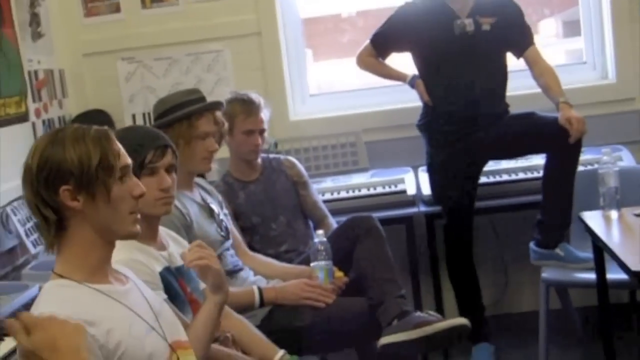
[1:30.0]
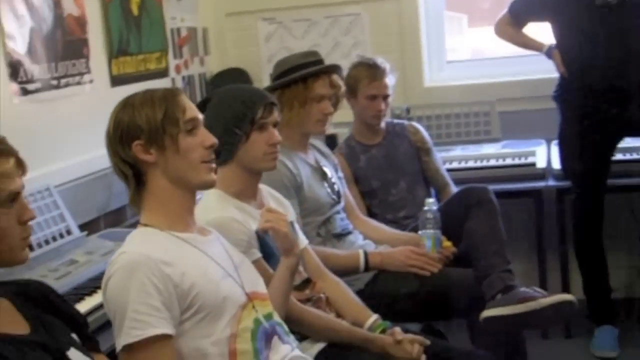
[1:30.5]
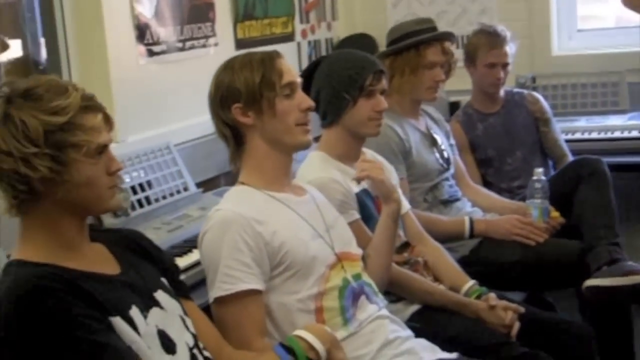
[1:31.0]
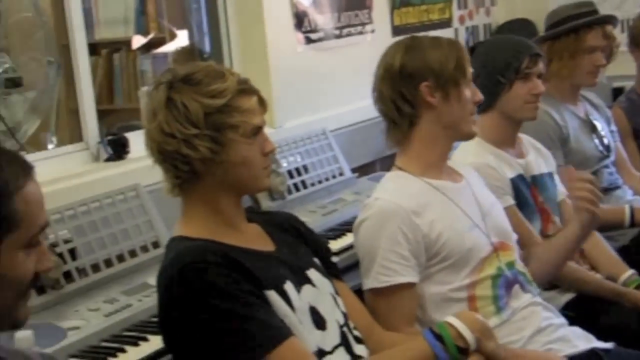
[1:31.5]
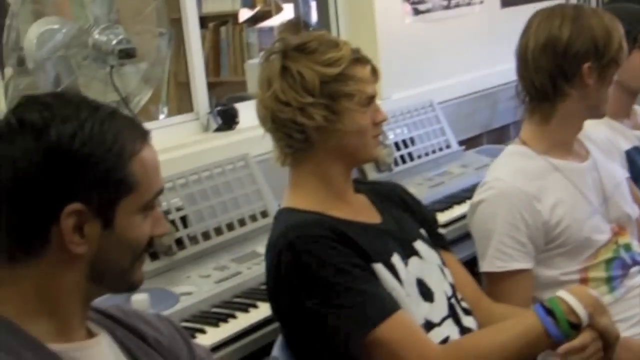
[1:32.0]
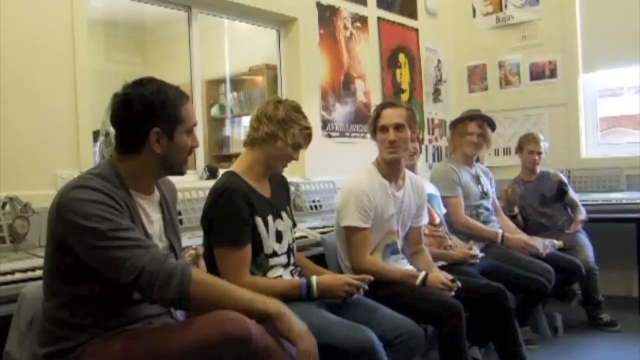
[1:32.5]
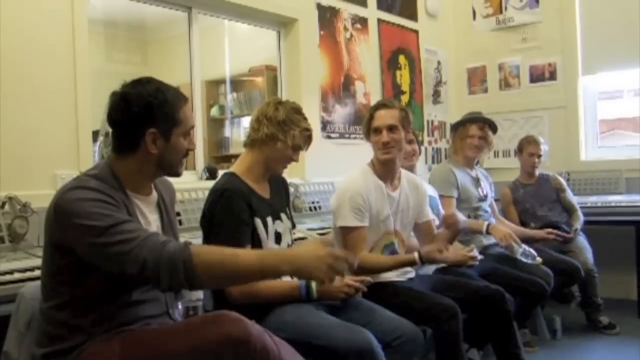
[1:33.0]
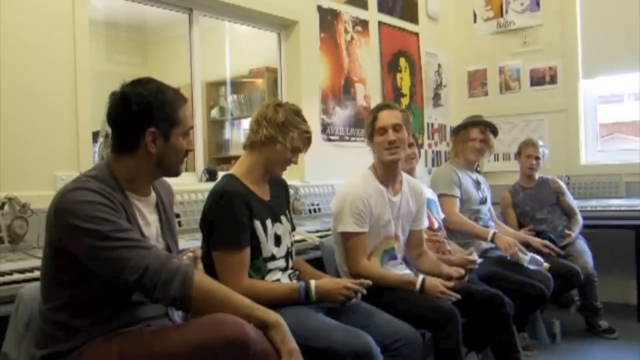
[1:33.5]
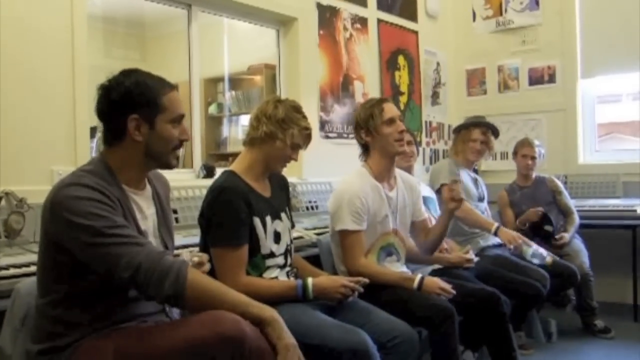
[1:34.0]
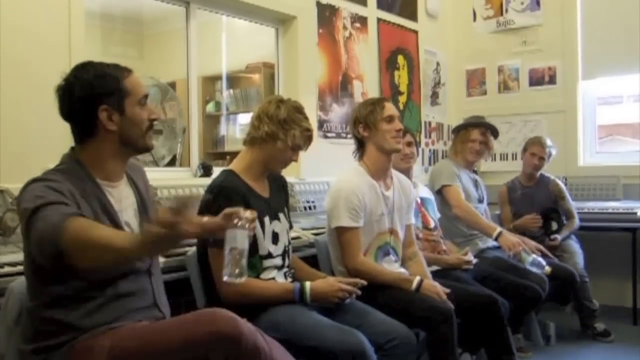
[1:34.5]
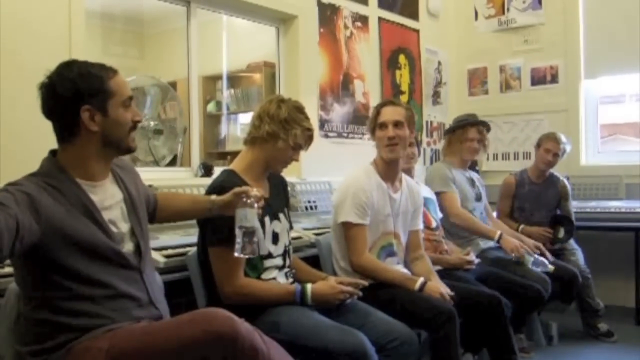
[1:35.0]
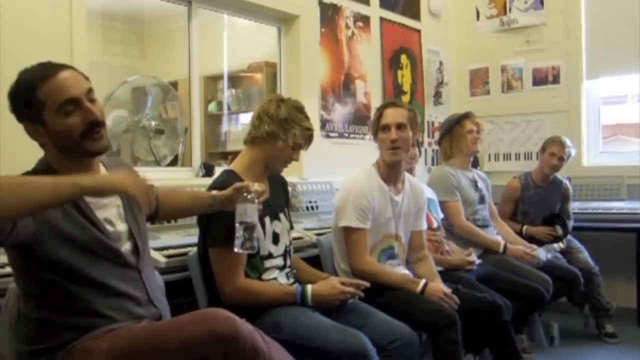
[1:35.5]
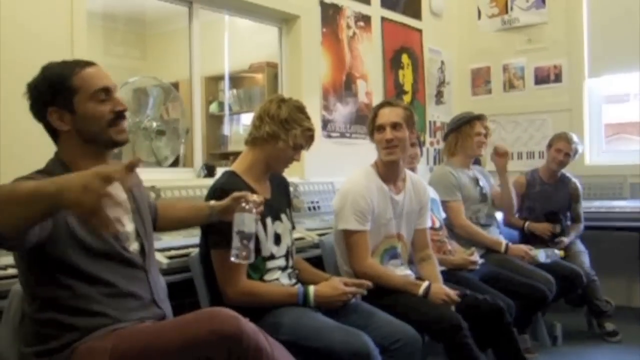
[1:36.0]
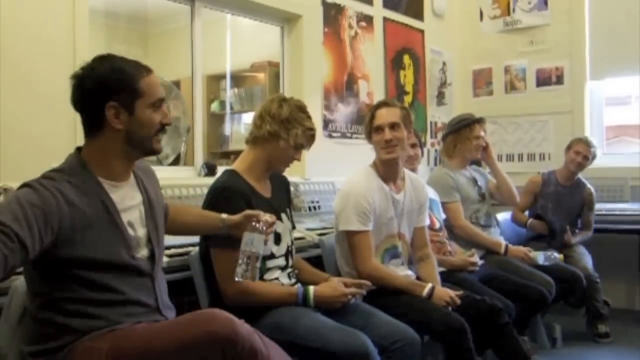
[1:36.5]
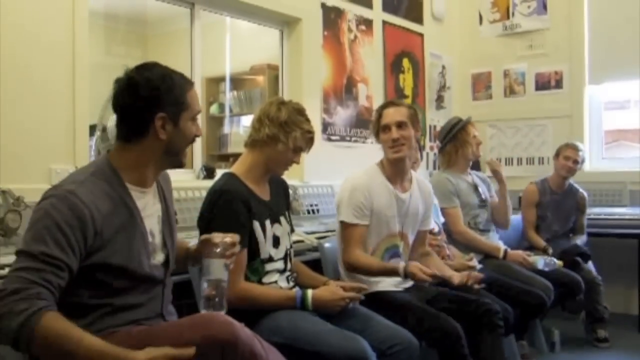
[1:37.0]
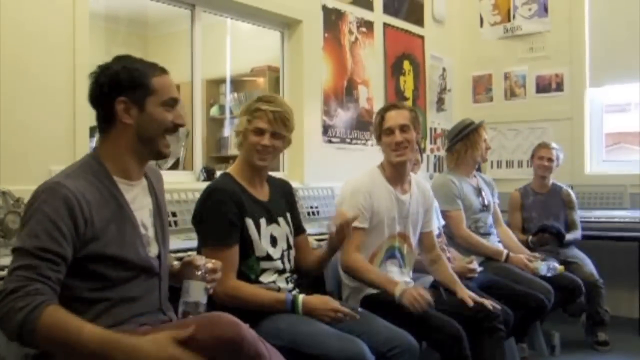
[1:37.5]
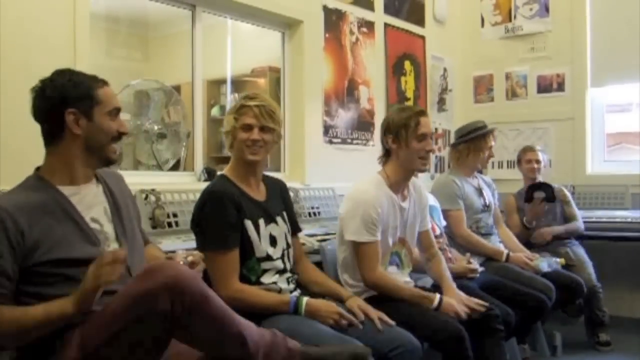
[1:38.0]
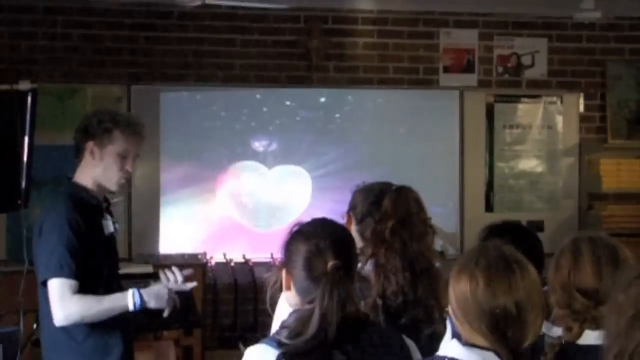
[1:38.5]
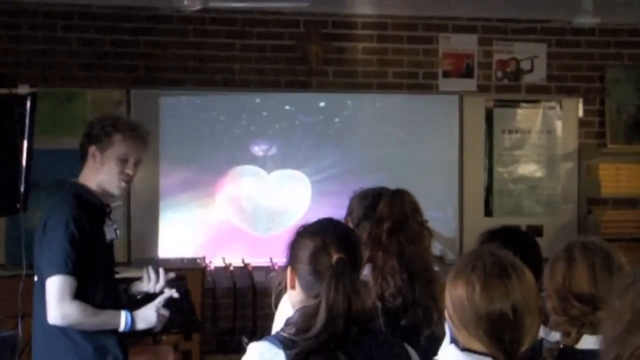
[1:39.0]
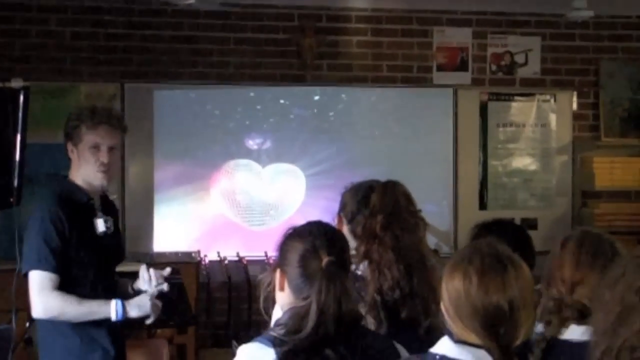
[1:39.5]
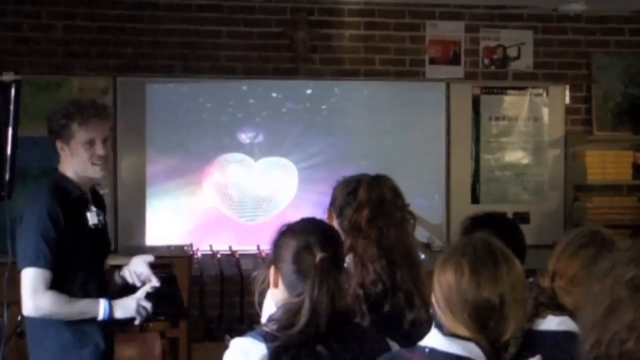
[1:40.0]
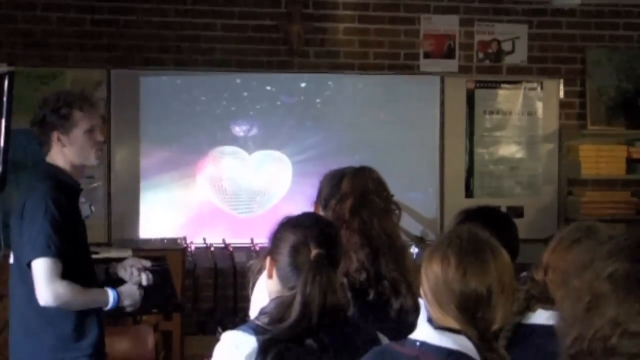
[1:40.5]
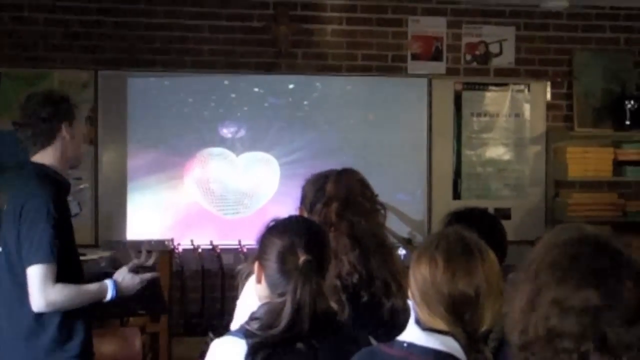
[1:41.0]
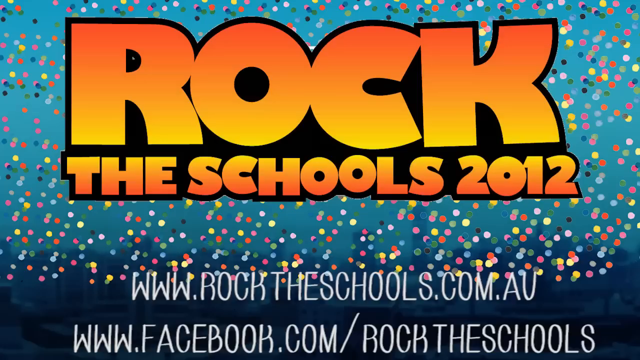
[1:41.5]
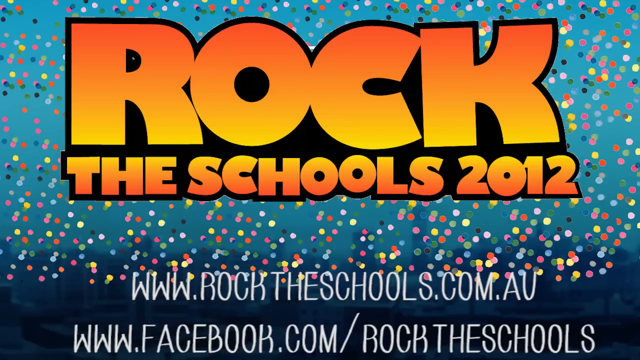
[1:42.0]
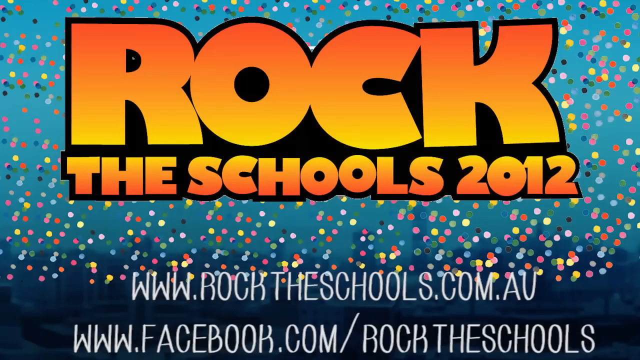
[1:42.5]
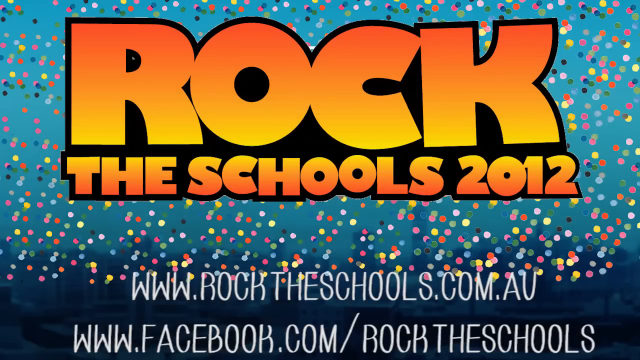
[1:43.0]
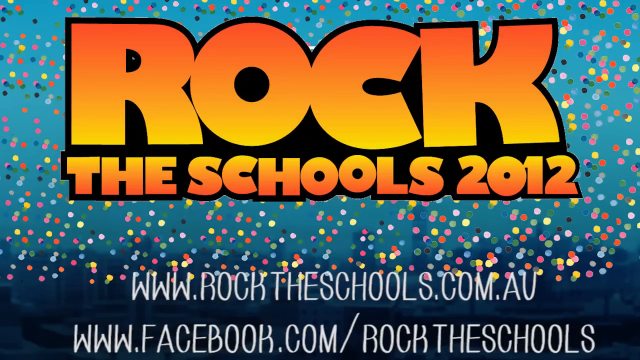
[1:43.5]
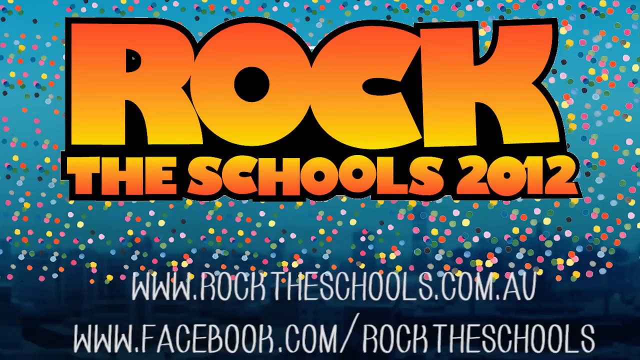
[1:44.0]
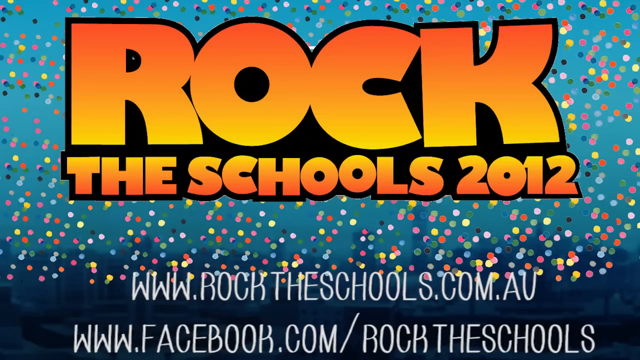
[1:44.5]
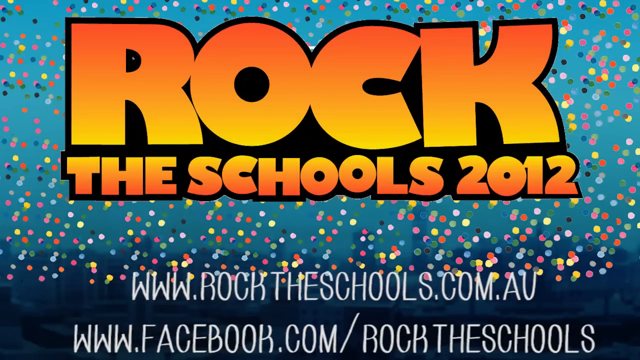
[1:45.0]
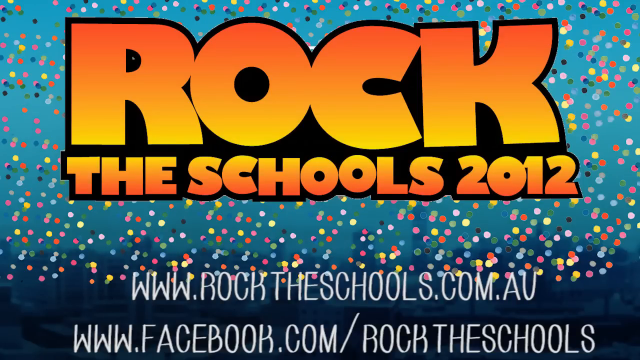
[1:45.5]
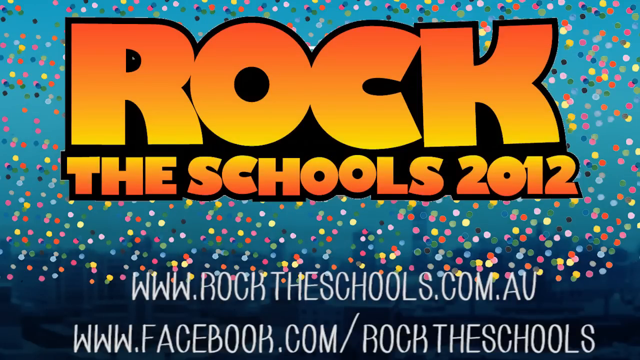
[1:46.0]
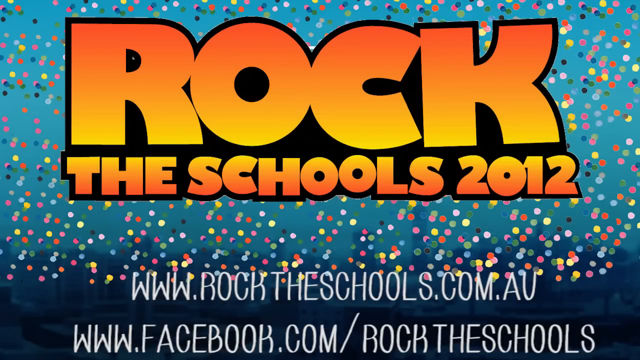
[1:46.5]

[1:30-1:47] The young man on the left is shown; they have their backs against a row of keyboards behind them and seem to be being interviewed or something, talking animatedly and moving their arms back and forth. Next, a man stands in a black T-shirt, enumerating something on his fingers: he holds up a finger and points at it with the other hand, then counts off a second finger, and so on. Behind him, turned away from, is a video screen of some sort showing recorded video with a heart shape on it. Then a wide shot shows the sign reading "The Rock, The Schools 2012," with "www.rocktheschools.com.au" below it and Facebook and other information below that.